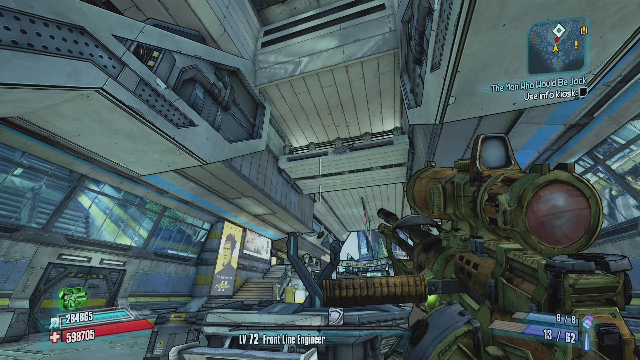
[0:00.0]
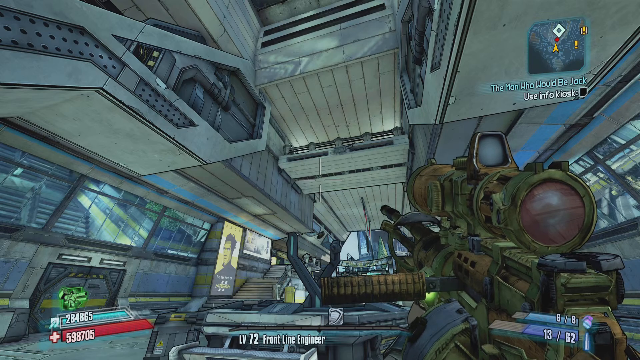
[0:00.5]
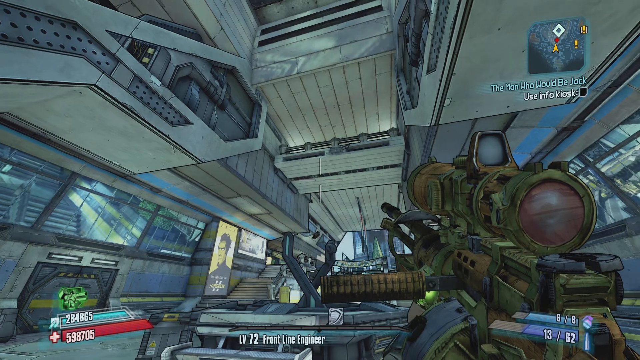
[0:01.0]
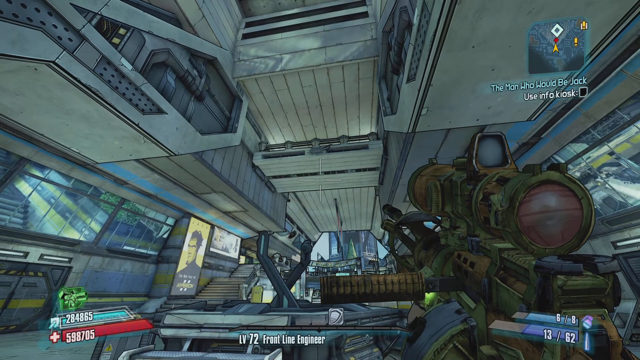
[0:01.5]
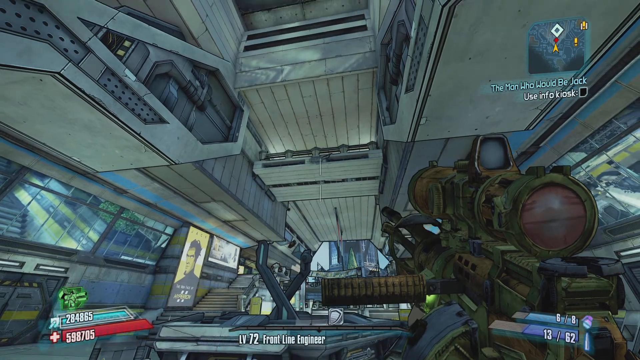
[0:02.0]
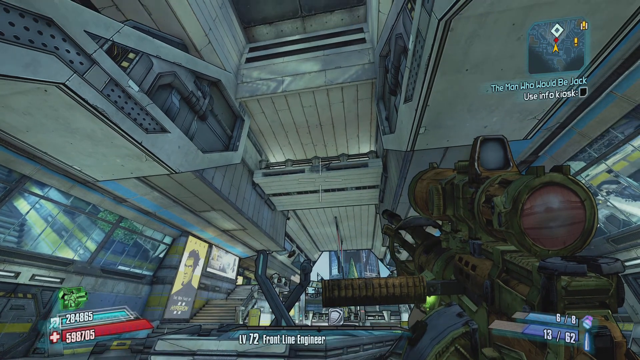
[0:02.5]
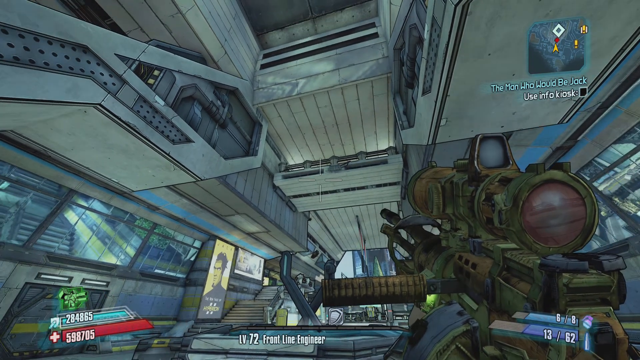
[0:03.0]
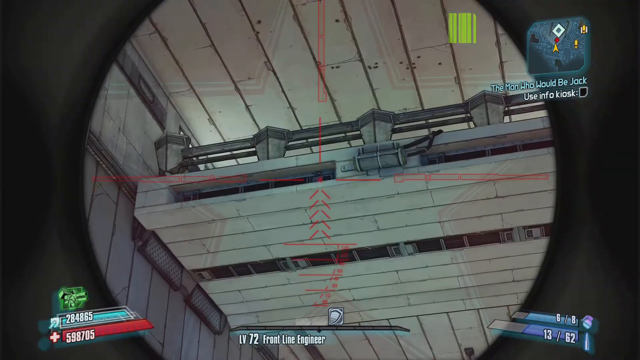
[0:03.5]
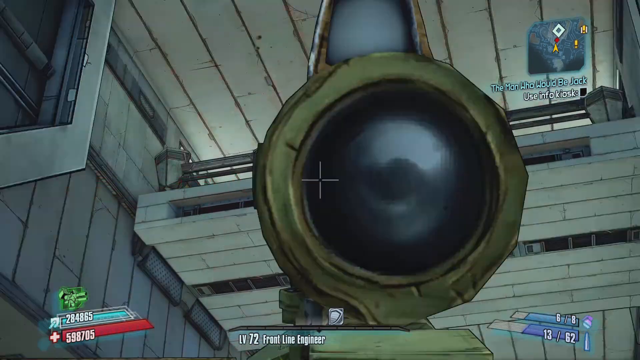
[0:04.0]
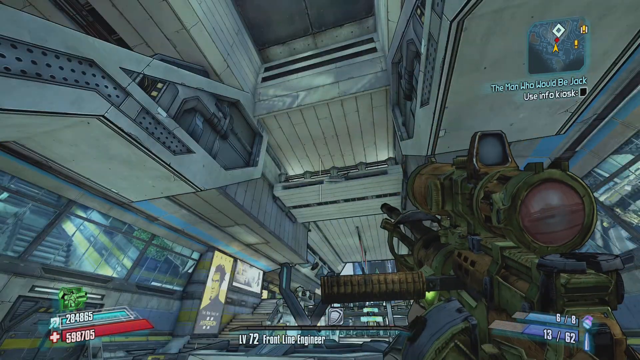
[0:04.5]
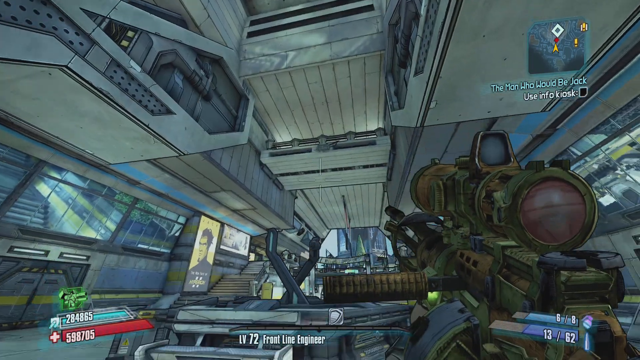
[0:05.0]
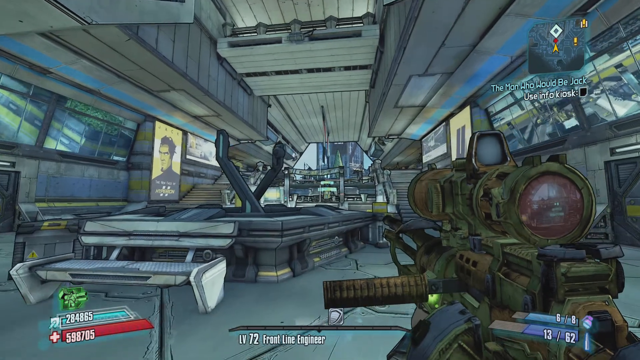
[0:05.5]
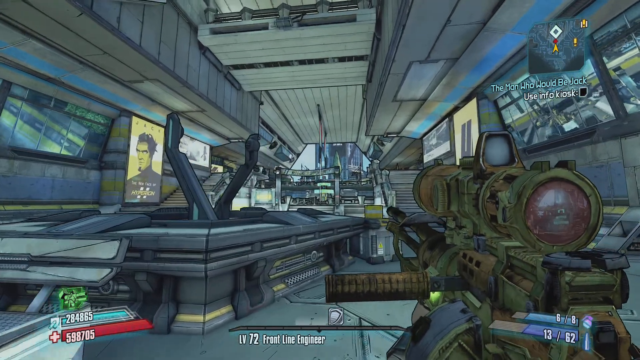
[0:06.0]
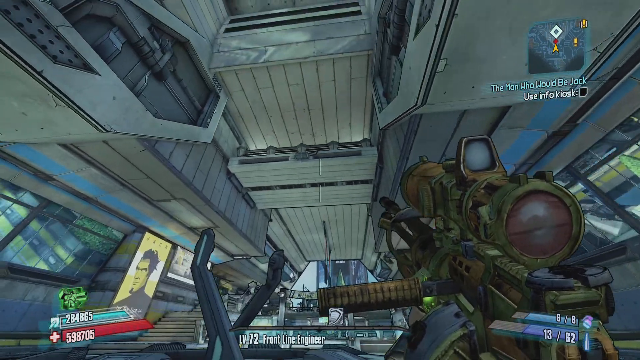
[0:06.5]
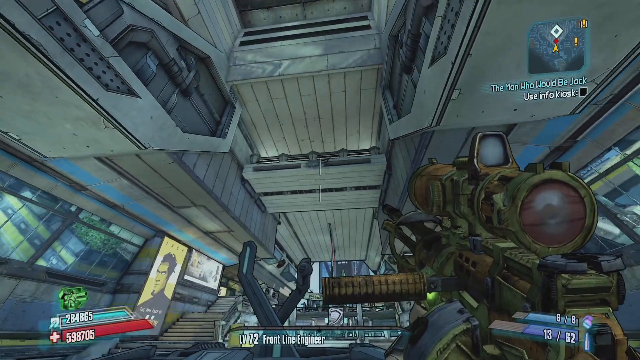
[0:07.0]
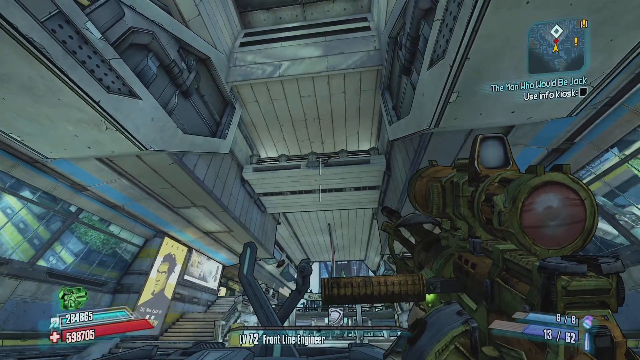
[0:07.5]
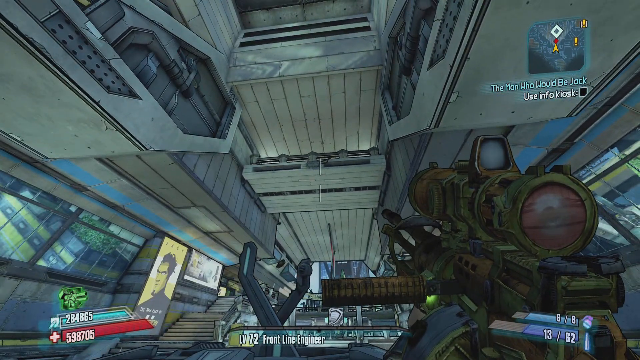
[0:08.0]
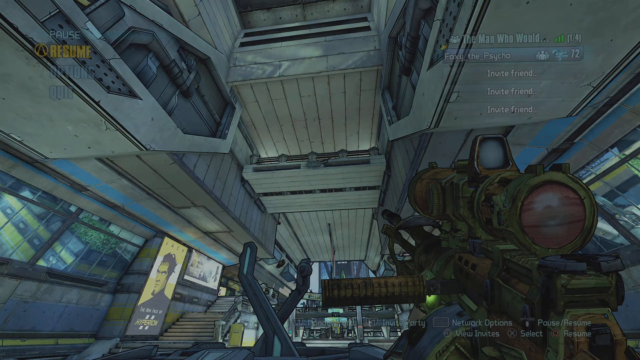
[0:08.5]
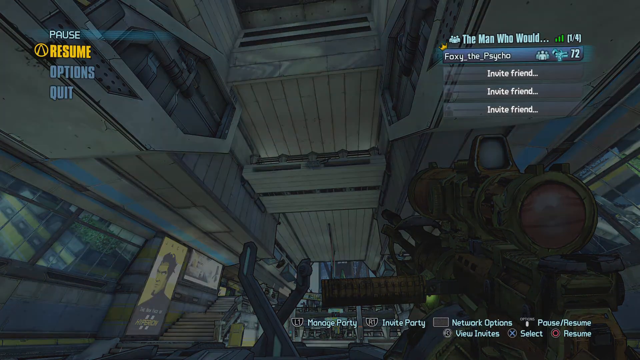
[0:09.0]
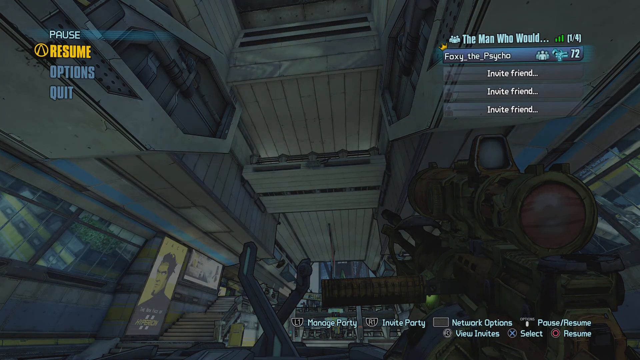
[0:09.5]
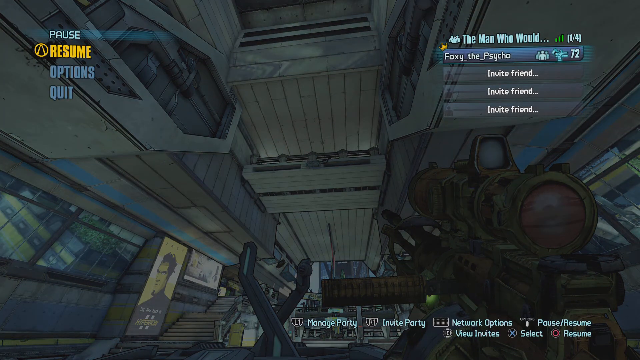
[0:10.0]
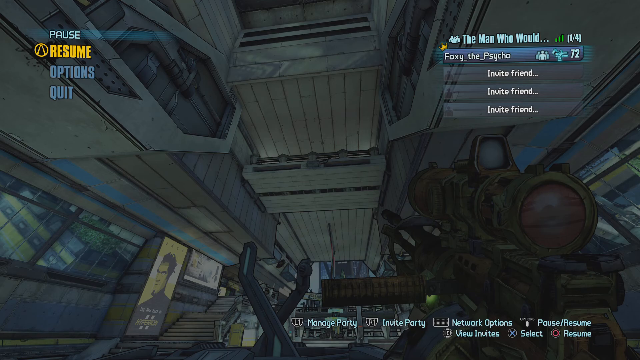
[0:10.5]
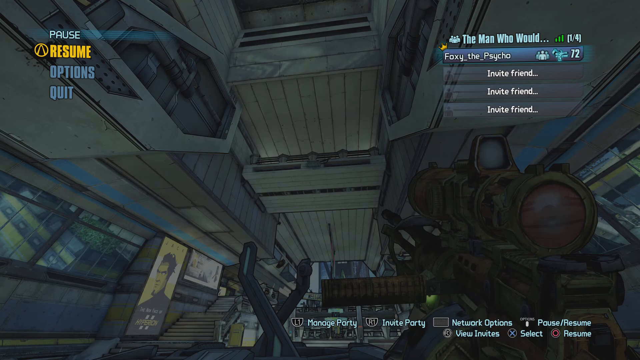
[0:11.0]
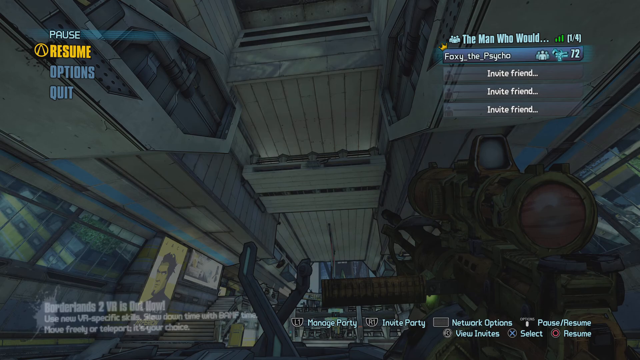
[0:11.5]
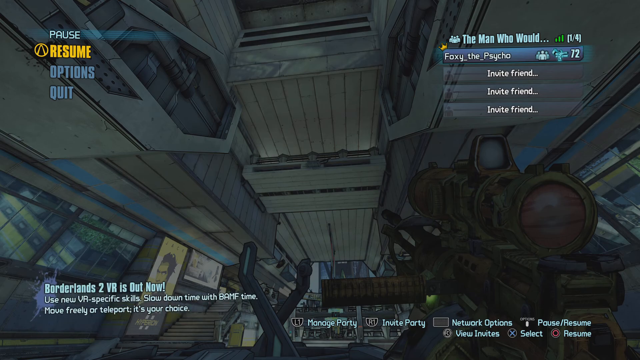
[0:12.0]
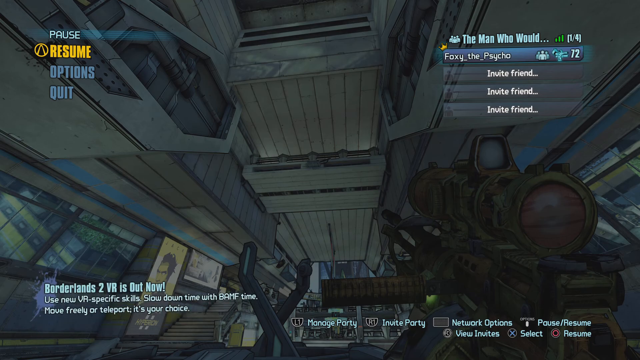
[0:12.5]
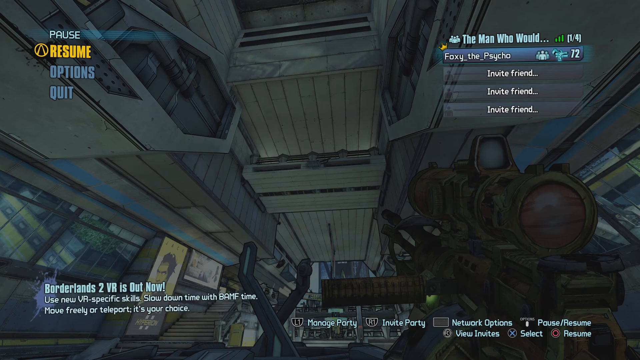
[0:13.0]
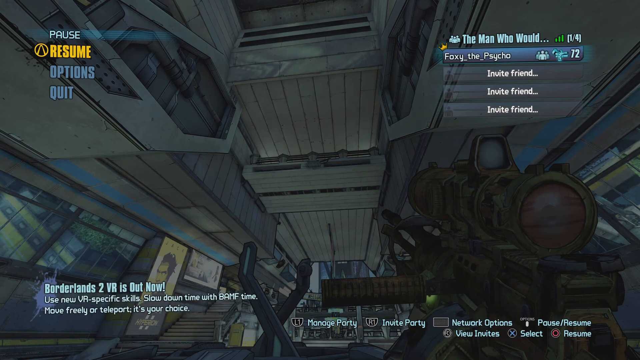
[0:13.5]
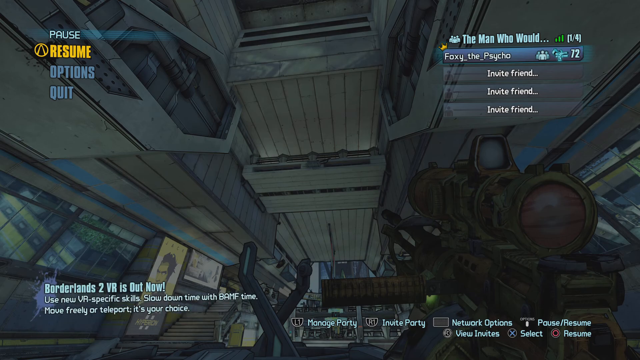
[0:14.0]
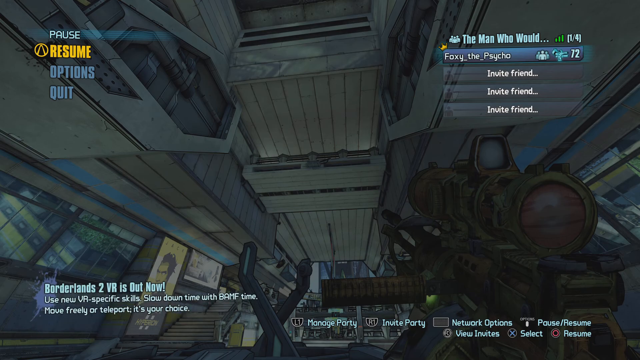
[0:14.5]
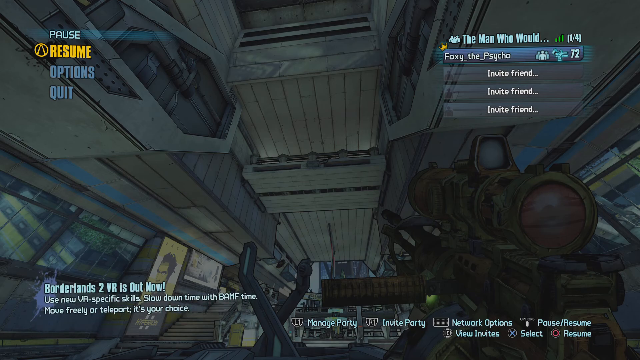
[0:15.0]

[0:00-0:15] The words "The Man Who Would Be Jack" appear, possibly the name of the game. The player name appears to be "Foxy the Psycho," and some scores are shown, one of which may be 72. The player holds a large rifle of some kind with a sight on top, aimed straight ahead. No one else is visible; the player seems to be alone. Posters are on the wall, and there are lots of stairways, suggesting the setting may be some kind of station, such as an underground station, or an airport, though it is hard to tell.